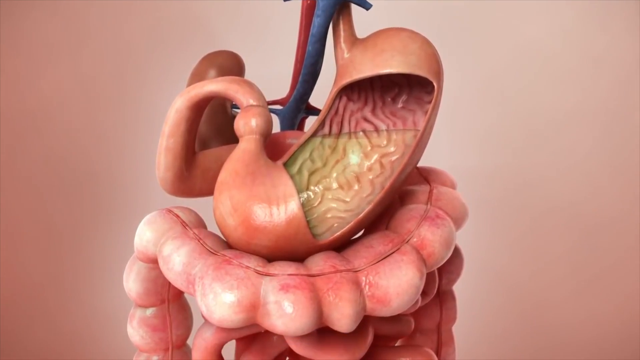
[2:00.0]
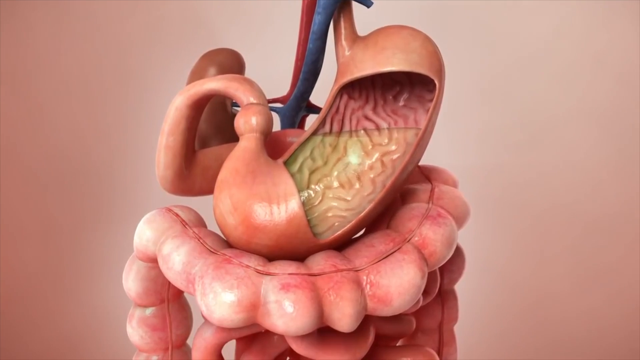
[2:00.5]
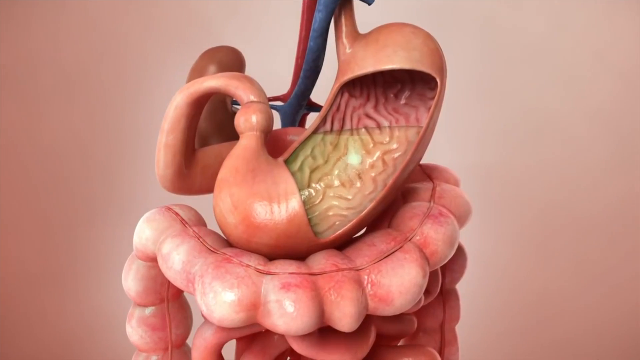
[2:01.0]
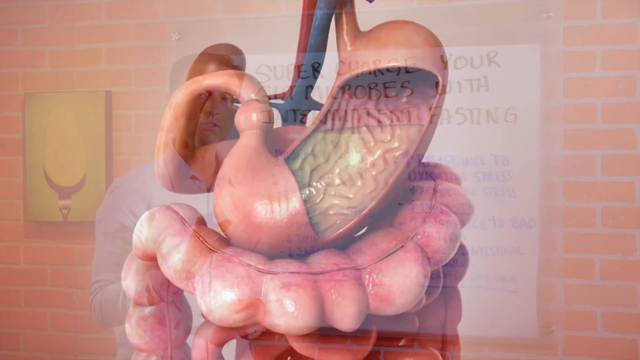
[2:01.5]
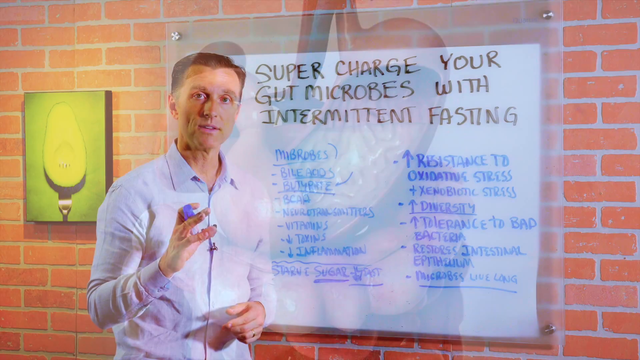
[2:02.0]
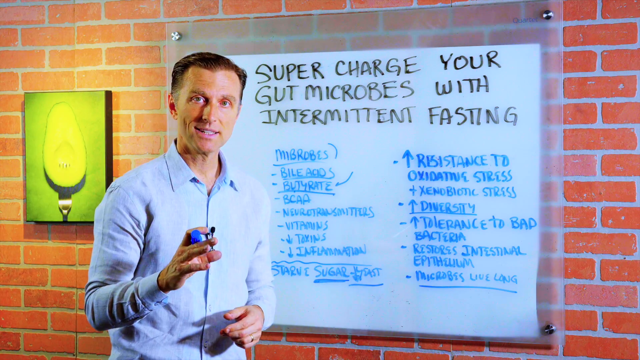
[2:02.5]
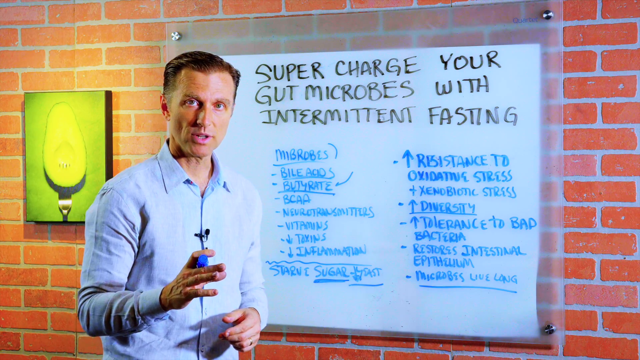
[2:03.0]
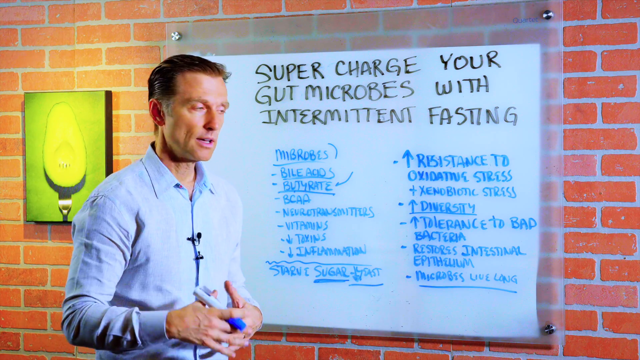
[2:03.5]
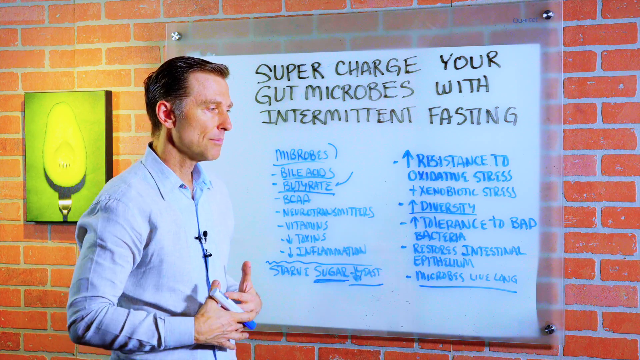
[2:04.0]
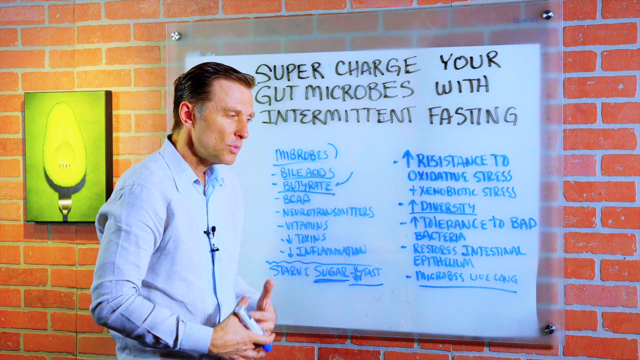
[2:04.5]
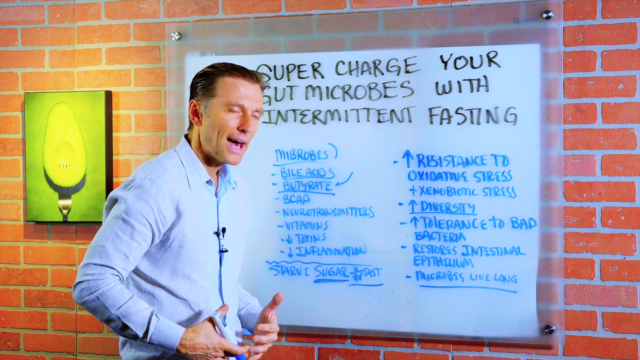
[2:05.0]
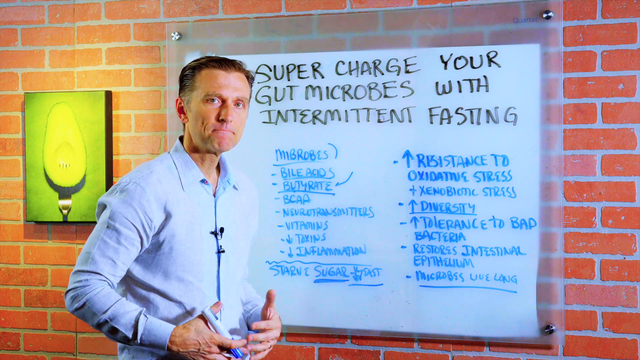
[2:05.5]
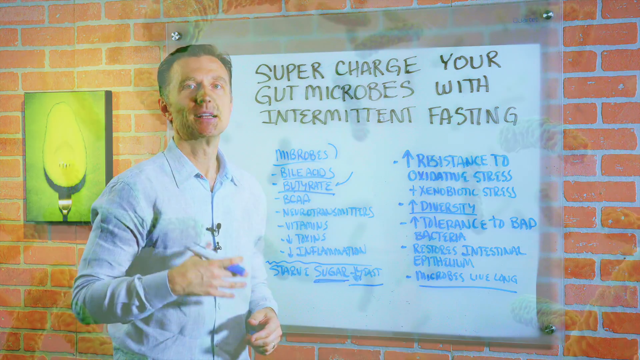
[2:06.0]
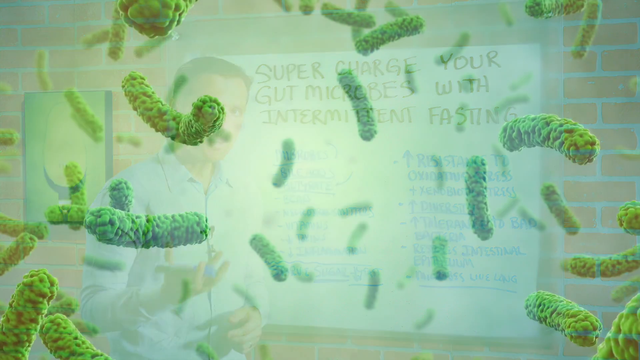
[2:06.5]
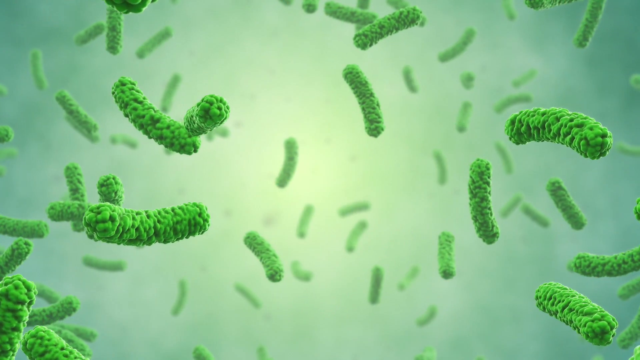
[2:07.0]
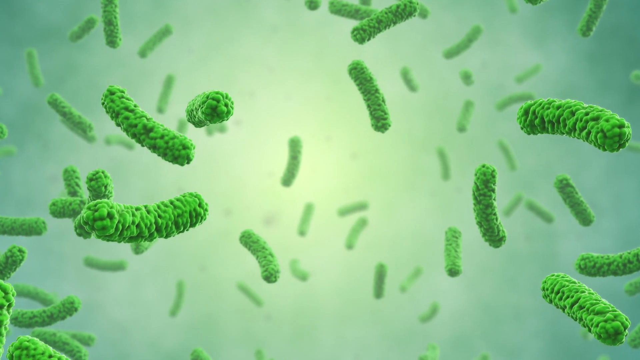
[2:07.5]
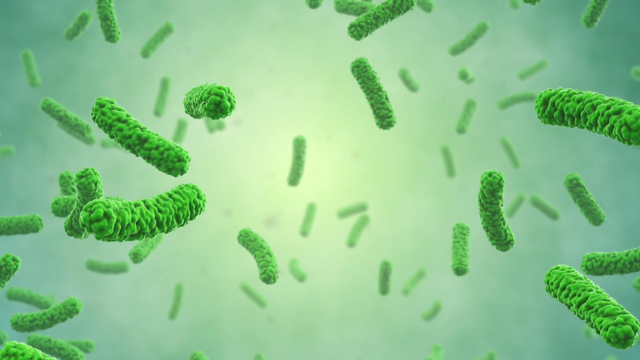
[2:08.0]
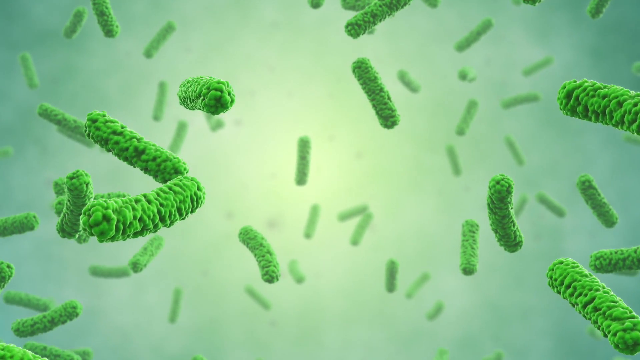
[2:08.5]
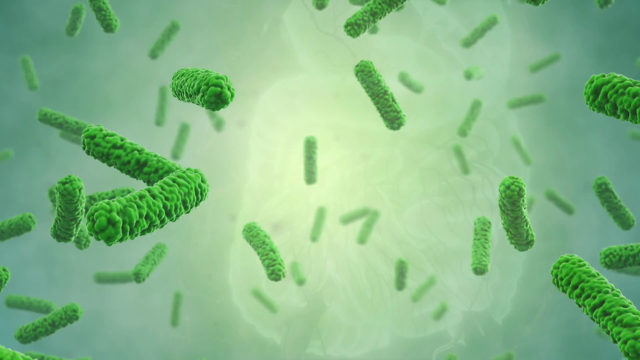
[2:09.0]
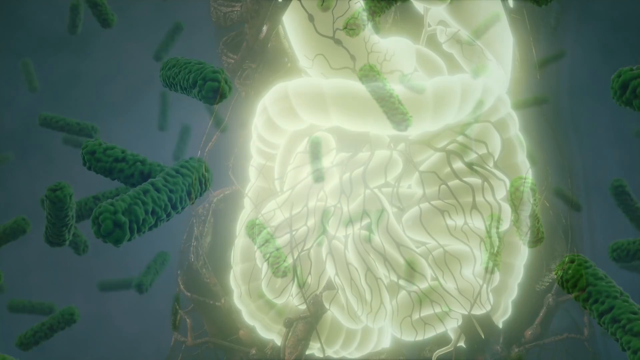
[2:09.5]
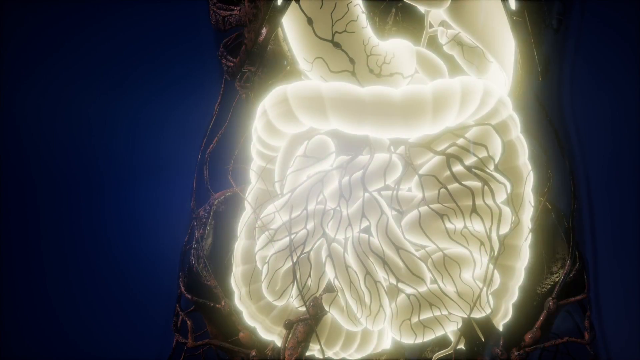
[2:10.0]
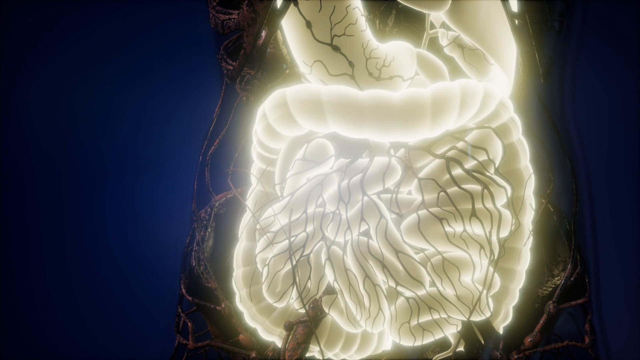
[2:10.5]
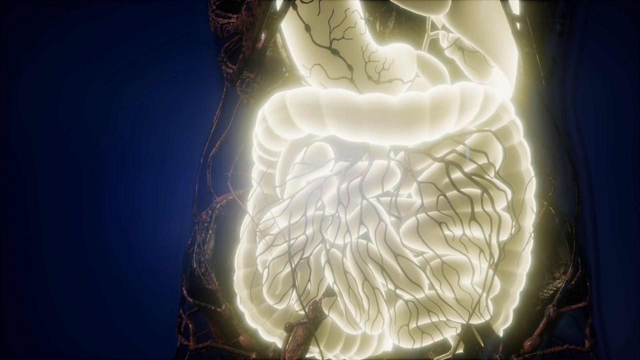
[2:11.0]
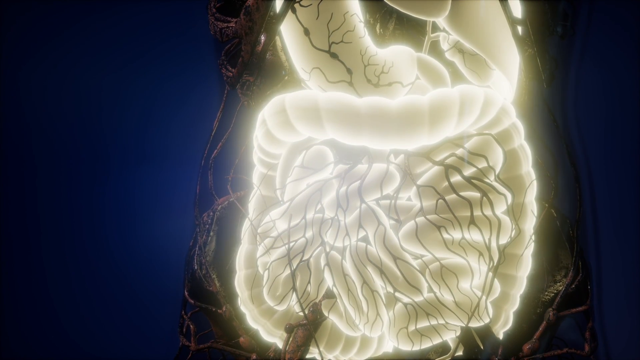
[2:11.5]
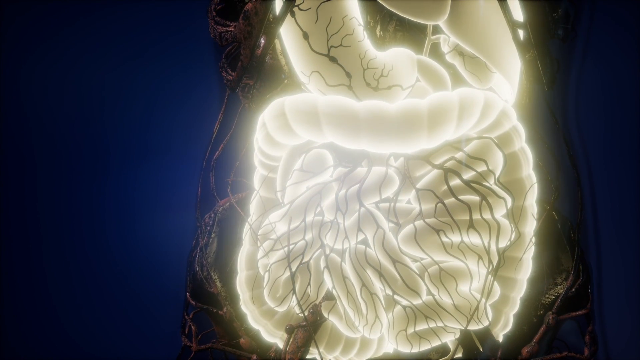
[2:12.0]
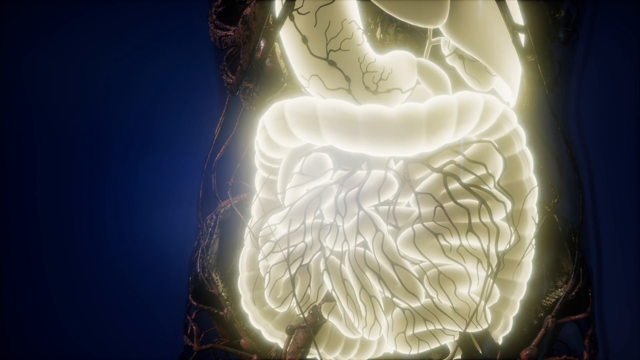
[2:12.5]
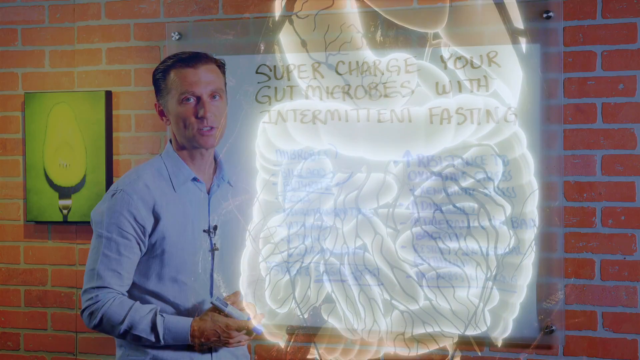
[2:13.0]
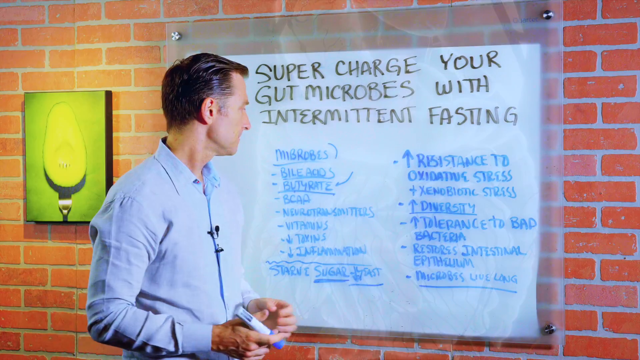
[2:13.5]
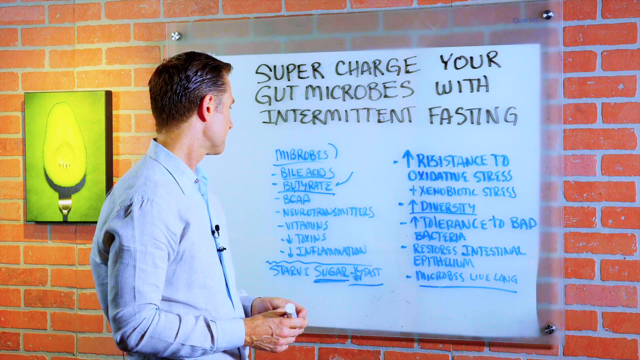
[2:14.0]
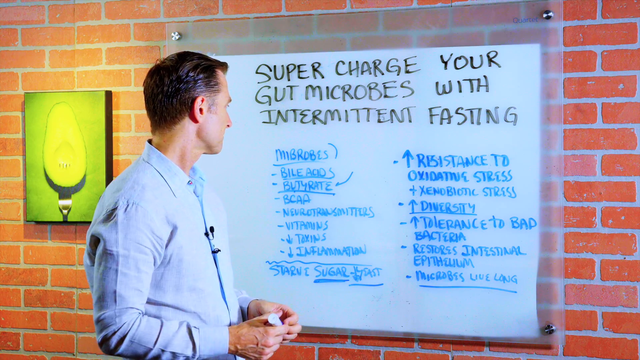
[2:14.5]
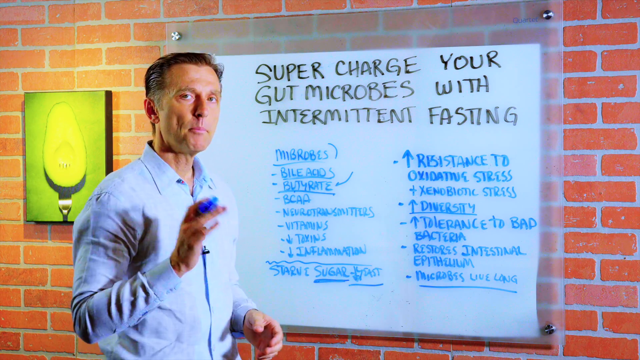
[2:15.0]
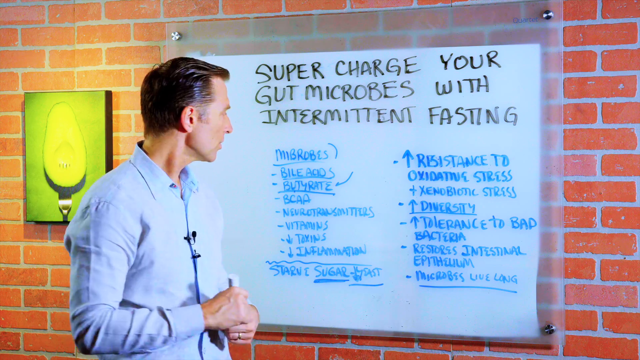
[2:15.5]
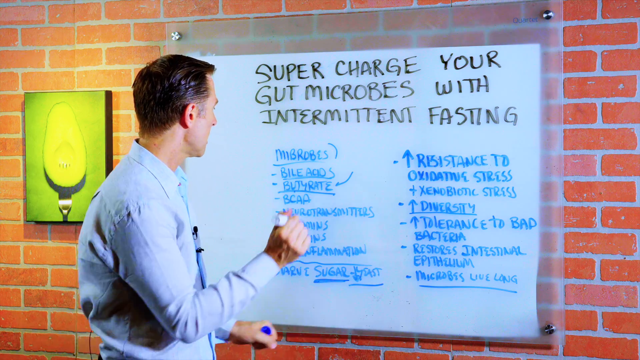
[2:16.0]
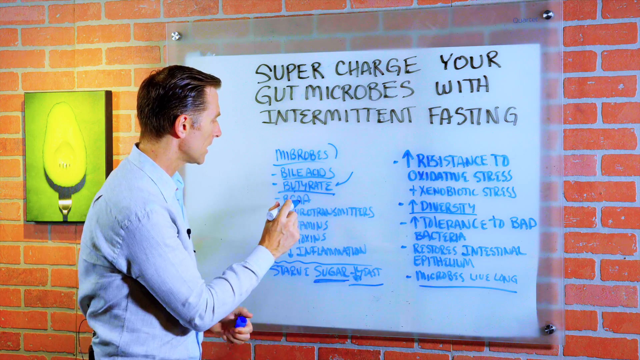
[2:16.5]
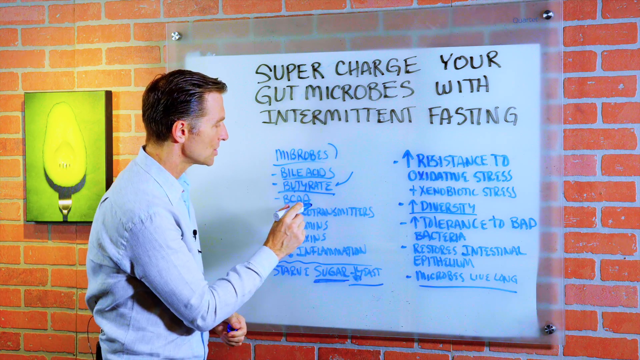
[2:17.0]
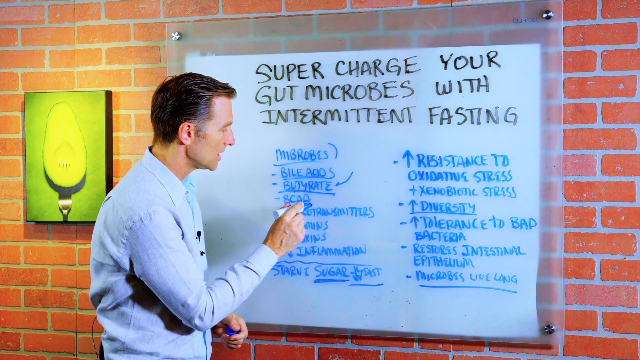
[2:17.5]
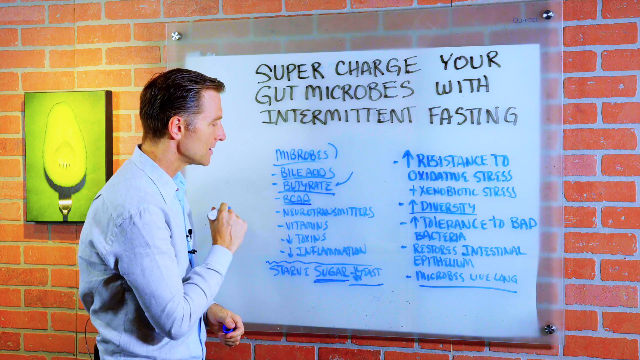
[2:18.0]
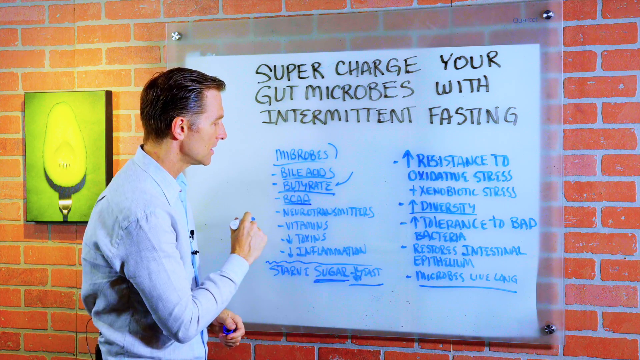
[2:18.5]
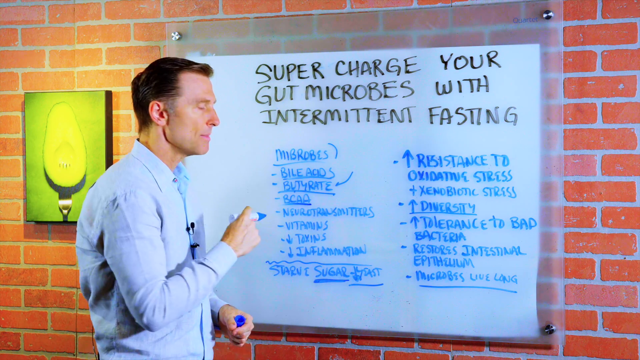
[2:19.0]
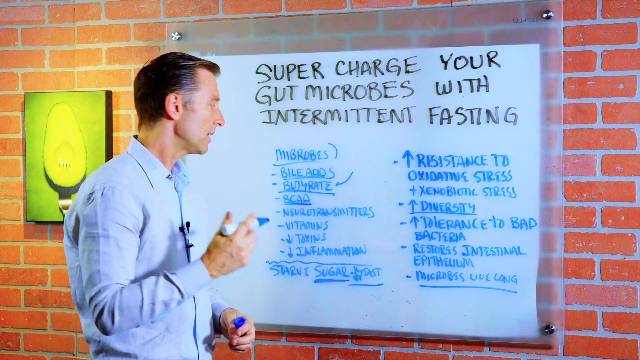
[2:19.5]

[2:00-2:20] An illustration model shows a human stomach resting on intestine; the stomach looks like it has been sliced open lengthwise, showing the inside. The camera pans closer to it, then the screen transitions to a man in a blue shirt holding a blue felt marker in his right hand, standing beside a whiteboard on an orange-reddish brick wall. He speaks about what he has written on the whiteboard. The board has a header in black capital letters reading "supercharge your gut microbes with intermittent fasting," with two columns of smaller blue text below it. He continues speaking and gestures towards his stomach. Next, a 3D animation shows what look like small cylindrical green microbes floating against a pale green background. Another illustration follows, showing what looks like a human intestine, with the colon encircling the small intestines, in white against a dark gray background. The man appears again beside the whiteboard and underlines a word on the board.